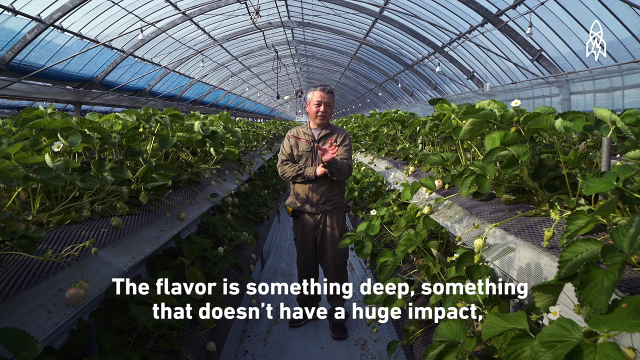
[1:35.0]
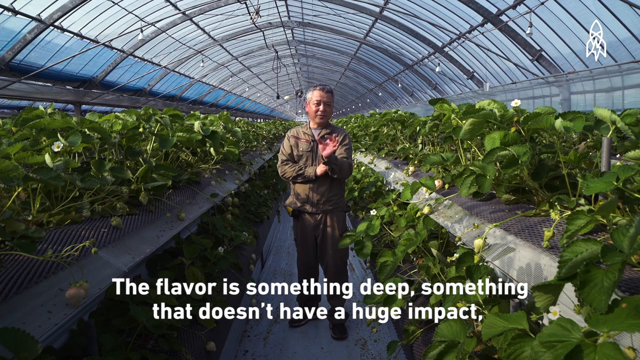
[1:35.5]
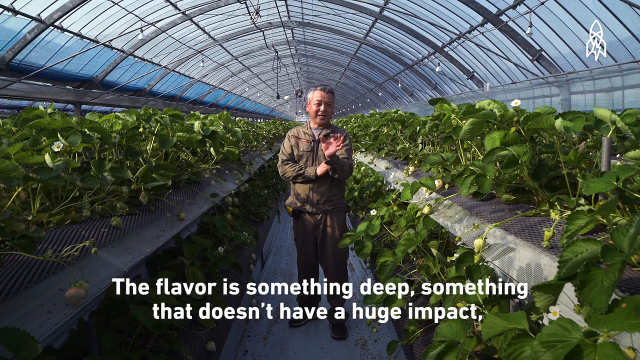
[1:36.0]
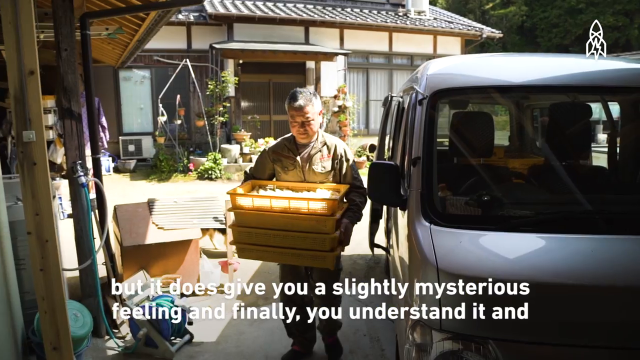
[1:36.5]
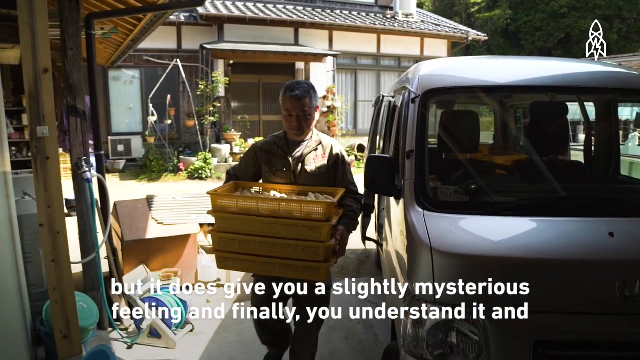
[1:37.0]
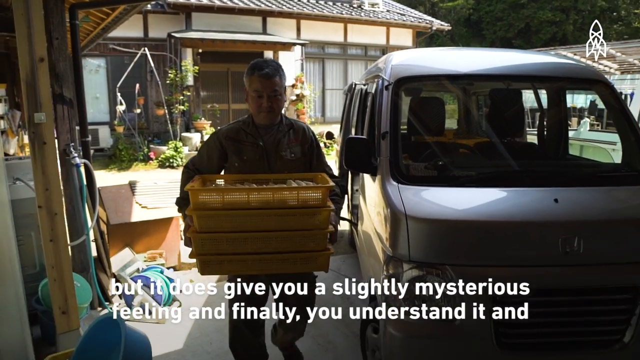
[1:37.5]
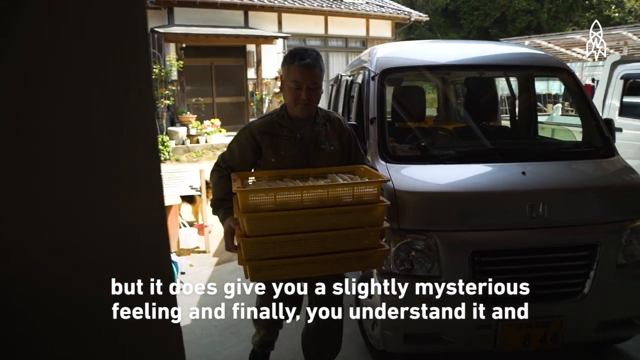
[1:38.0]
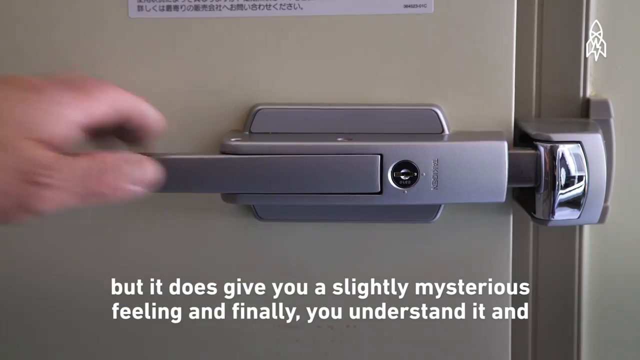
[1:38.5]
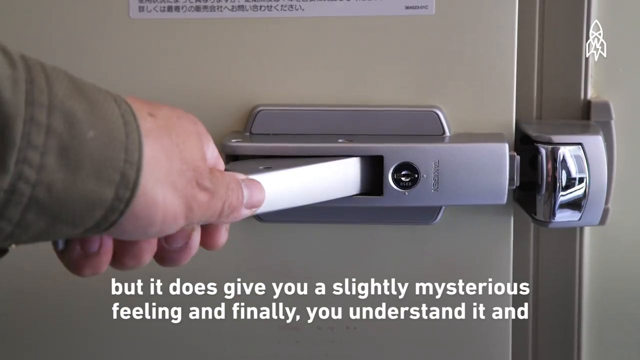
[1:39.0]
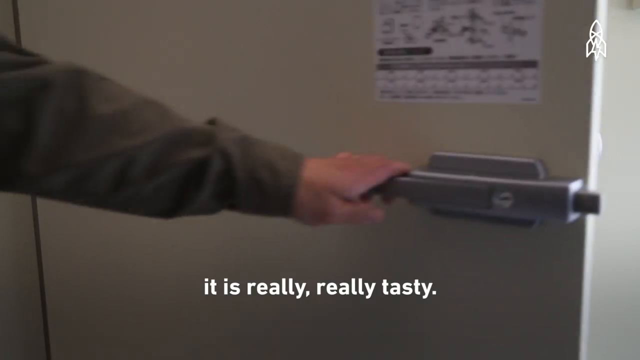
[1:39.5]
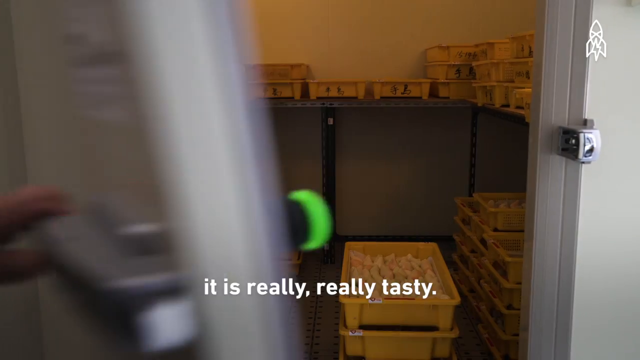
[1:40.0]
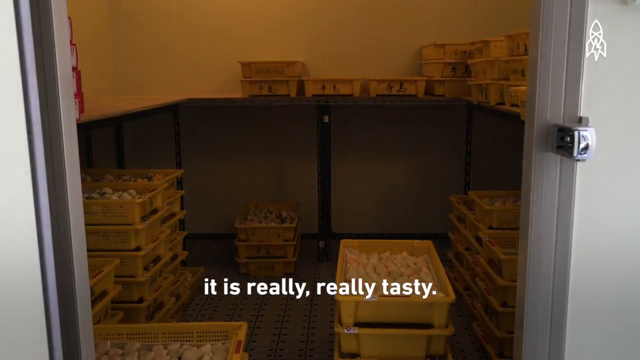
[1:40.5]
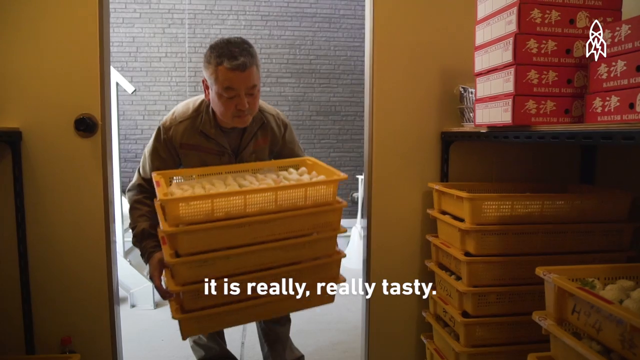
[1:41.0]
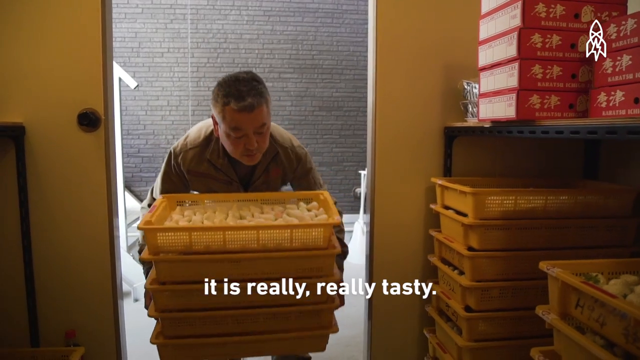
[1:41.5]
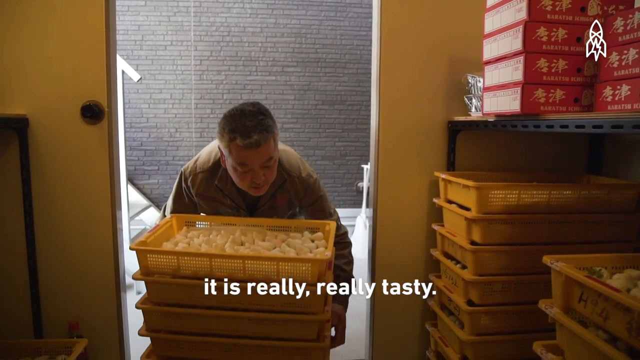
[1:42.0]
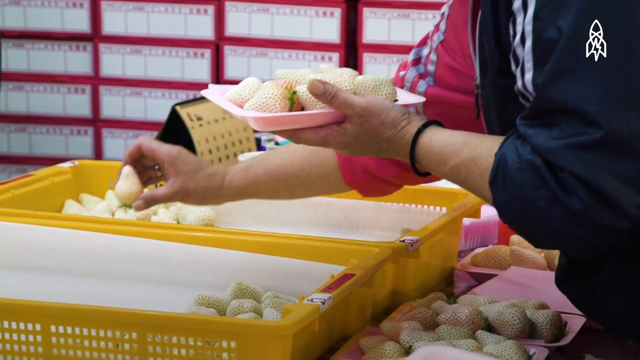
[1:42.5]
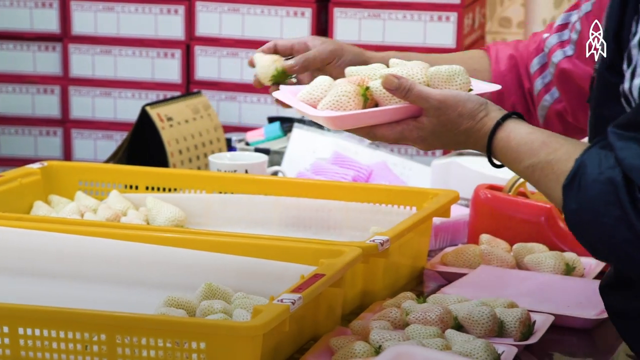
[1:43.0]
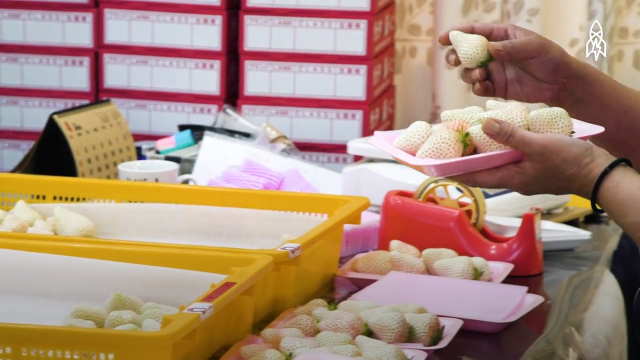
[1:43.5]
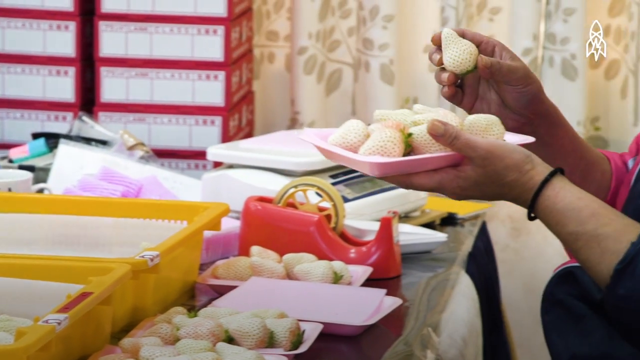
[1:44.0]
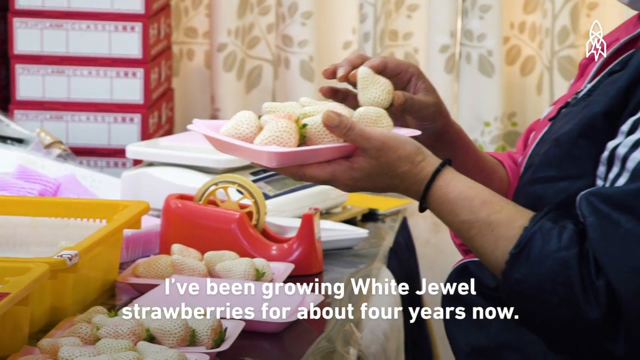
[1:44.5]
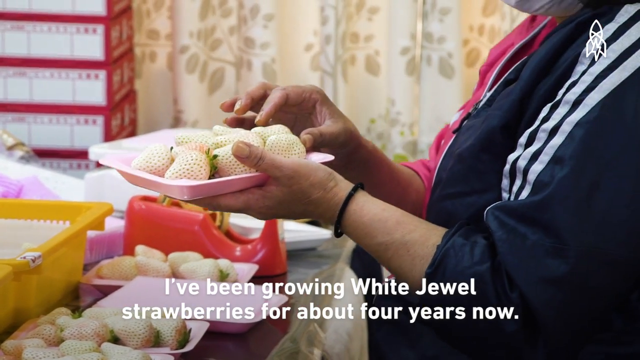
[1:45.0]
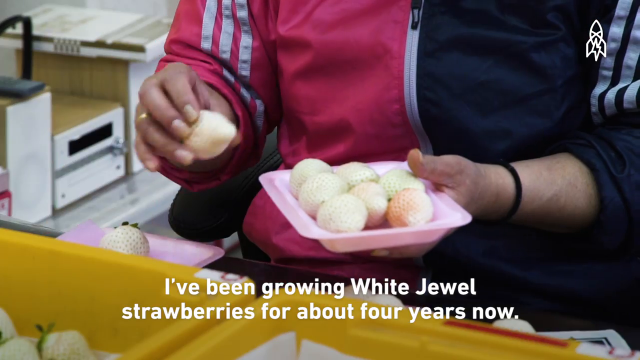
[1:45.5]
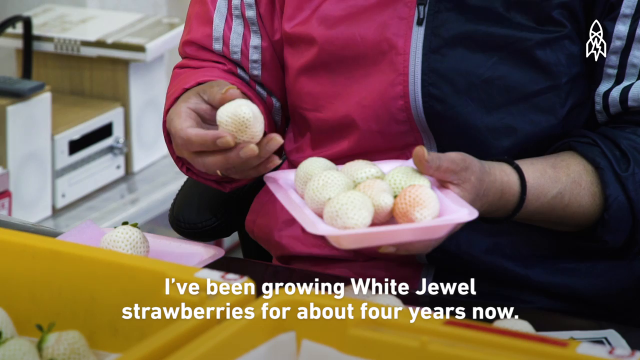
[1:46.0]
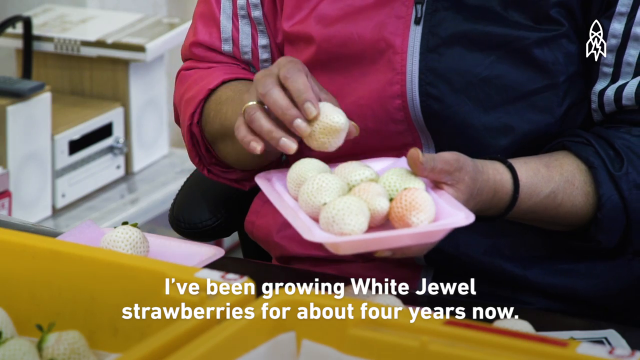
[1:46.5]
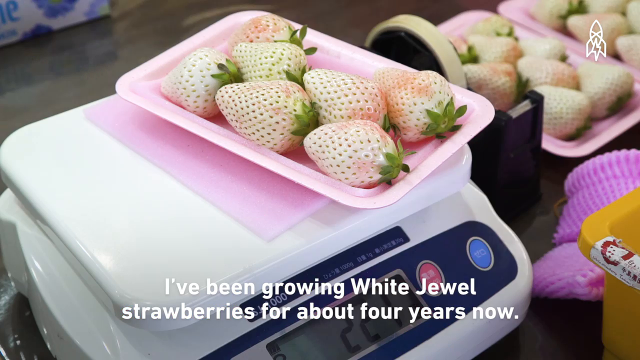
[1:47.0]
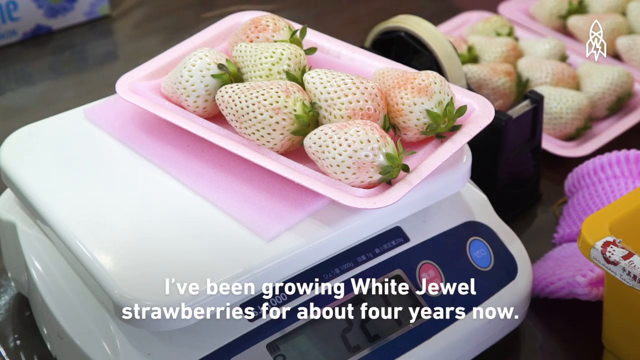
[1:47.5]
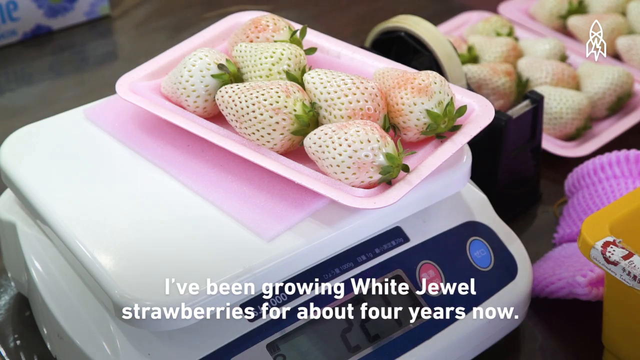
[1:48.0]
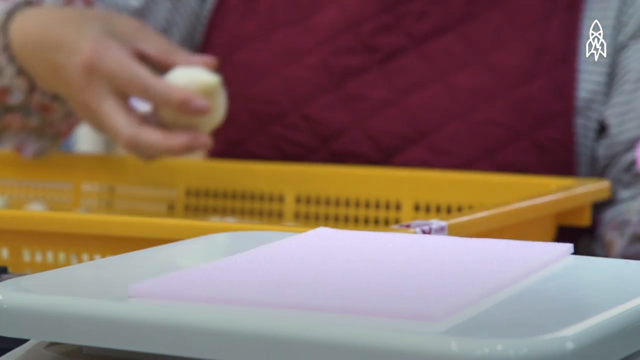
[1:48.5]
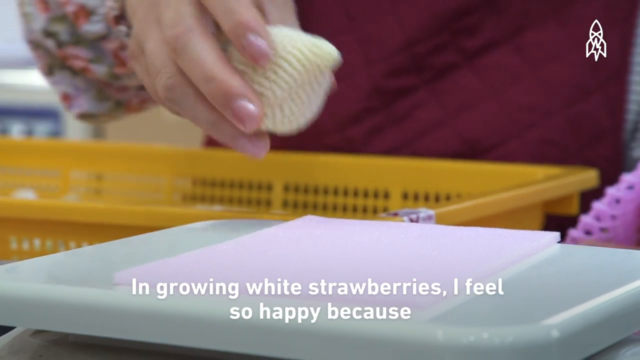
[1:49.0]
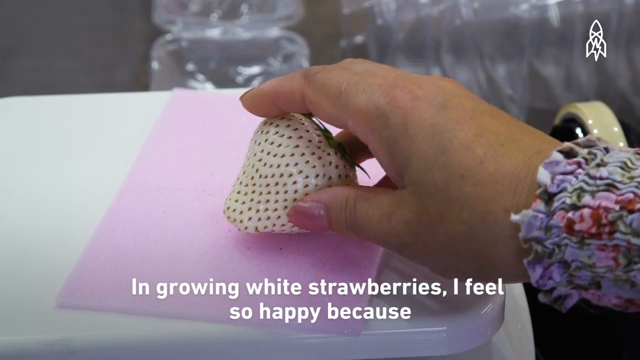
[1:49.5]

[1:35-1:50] Mr. Tashima carries yellow bins of white strawberries, weighs them on a scale, and stands proudly in his greenhouse talking. It looks like he places the white strawberries into an industrial-sized refrigerator. The greenhouse has many leaves, and the white jewel strawberry plants are flourishing.